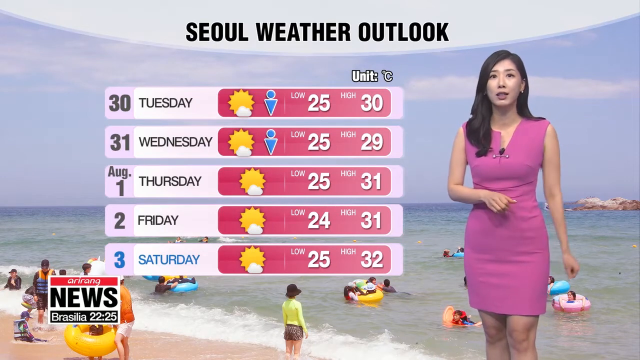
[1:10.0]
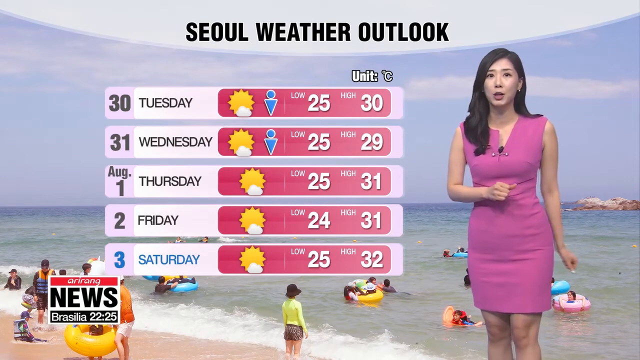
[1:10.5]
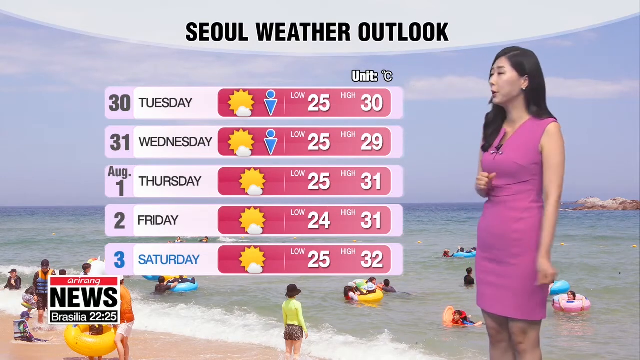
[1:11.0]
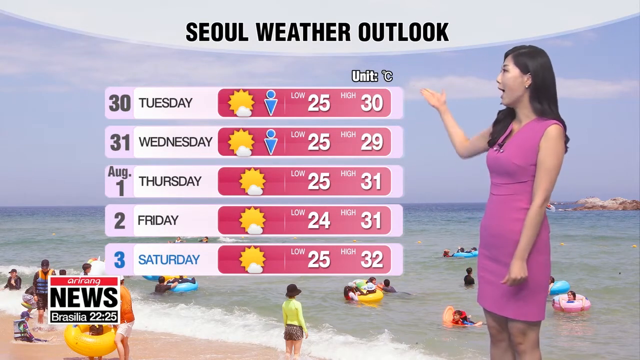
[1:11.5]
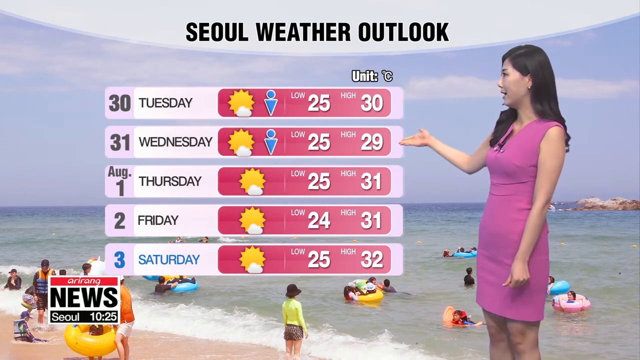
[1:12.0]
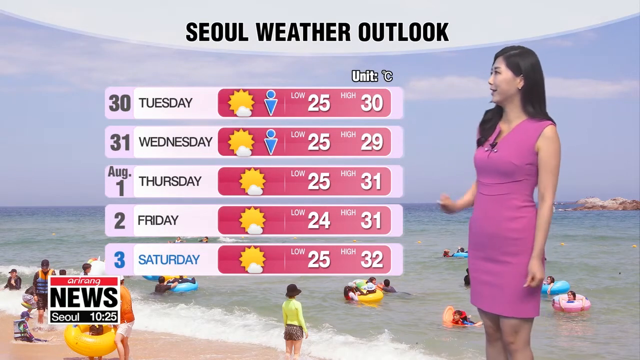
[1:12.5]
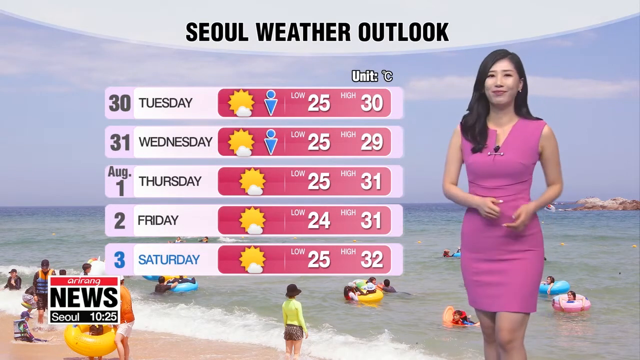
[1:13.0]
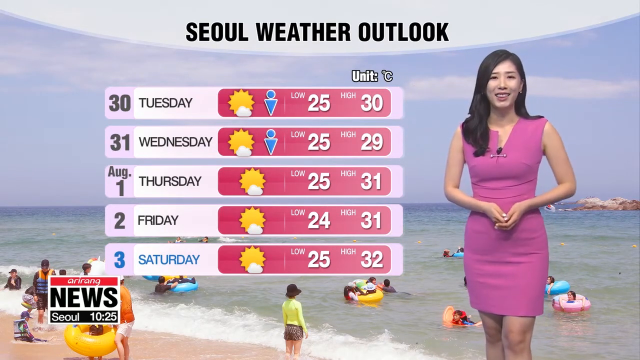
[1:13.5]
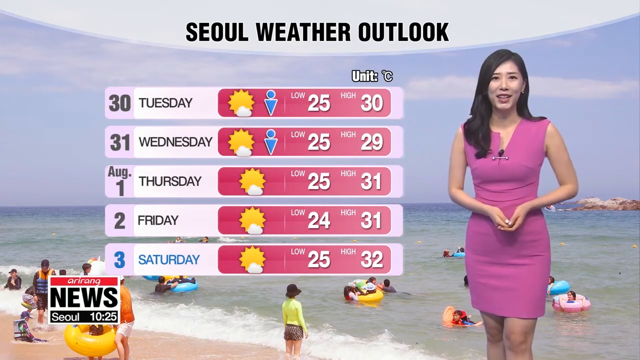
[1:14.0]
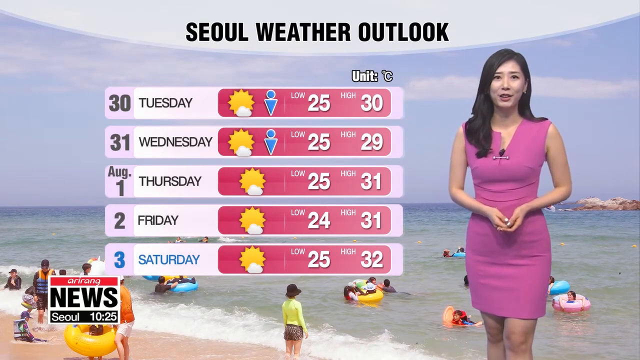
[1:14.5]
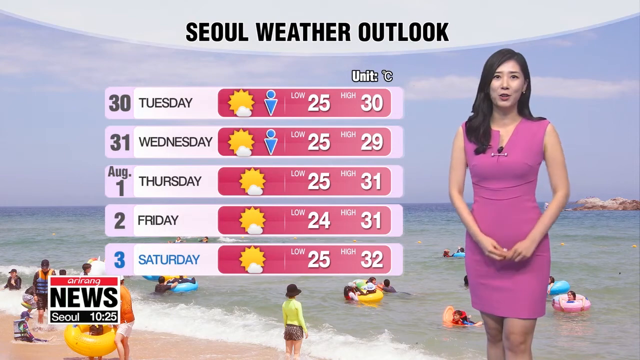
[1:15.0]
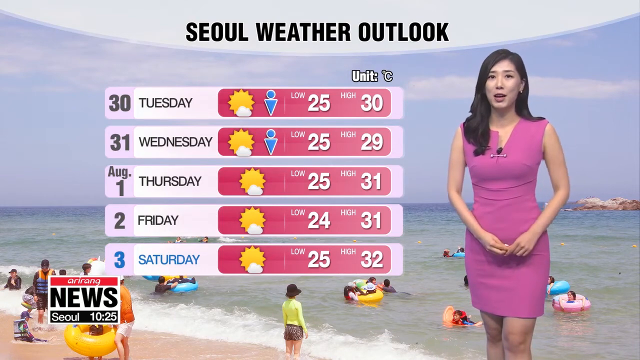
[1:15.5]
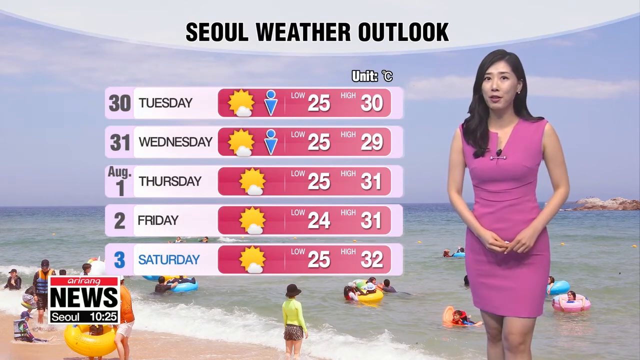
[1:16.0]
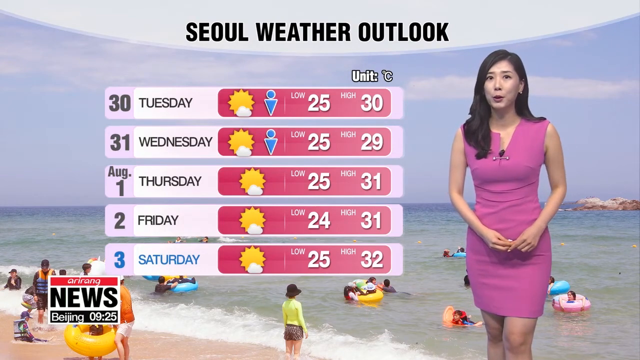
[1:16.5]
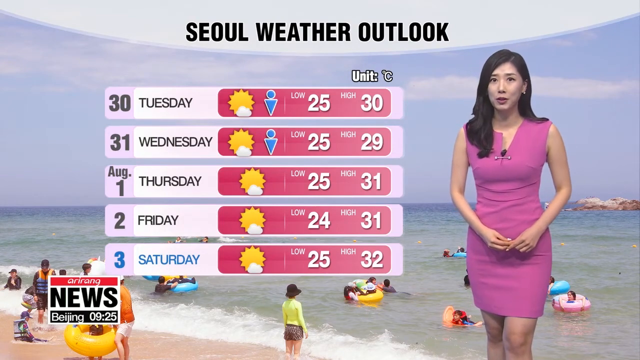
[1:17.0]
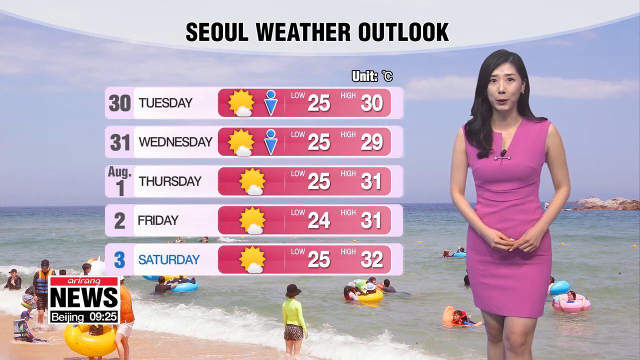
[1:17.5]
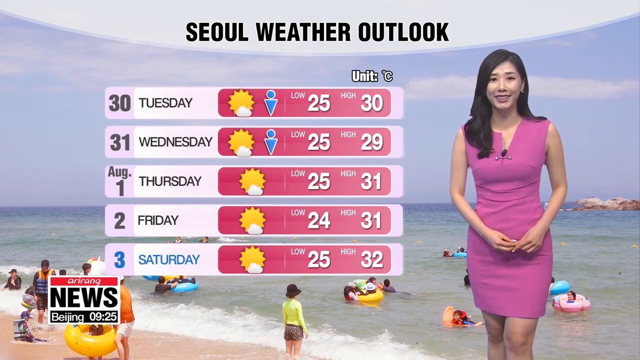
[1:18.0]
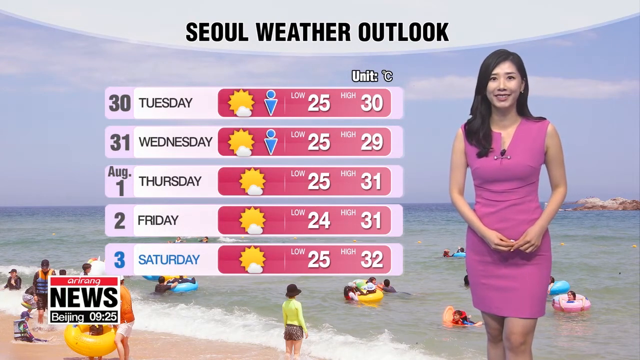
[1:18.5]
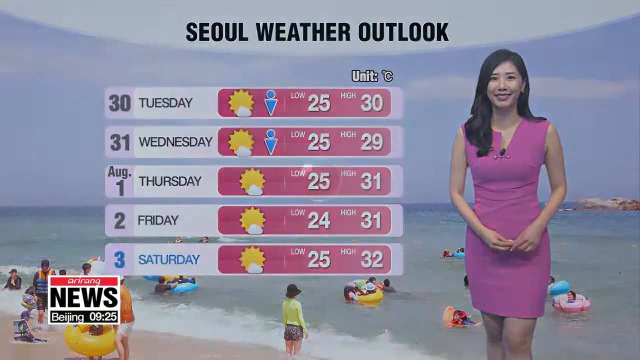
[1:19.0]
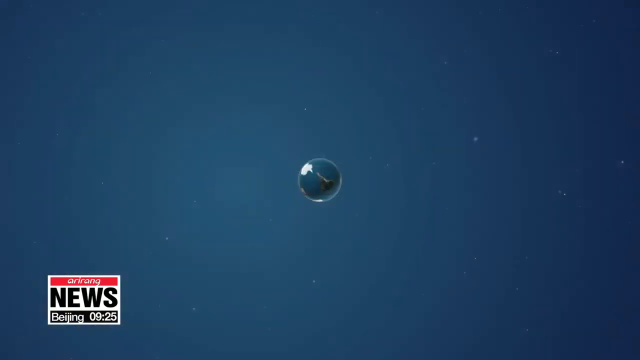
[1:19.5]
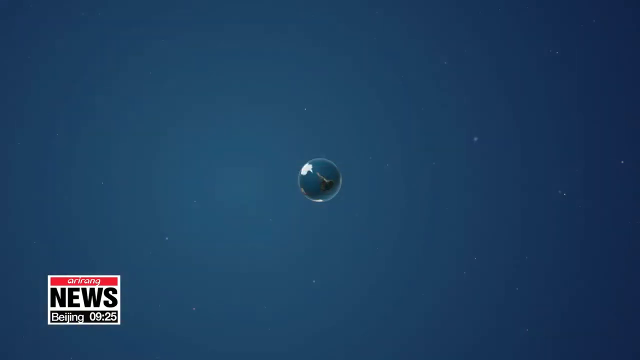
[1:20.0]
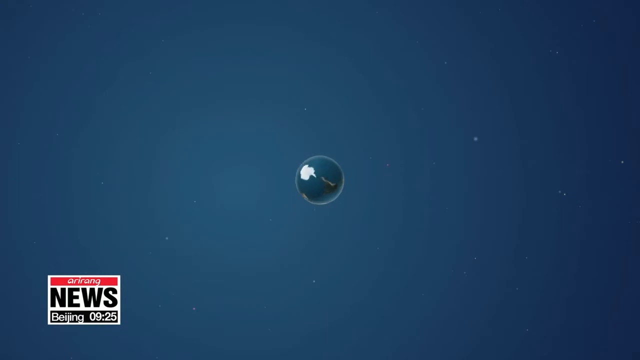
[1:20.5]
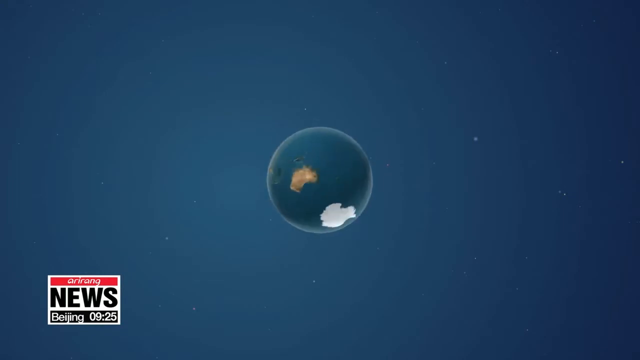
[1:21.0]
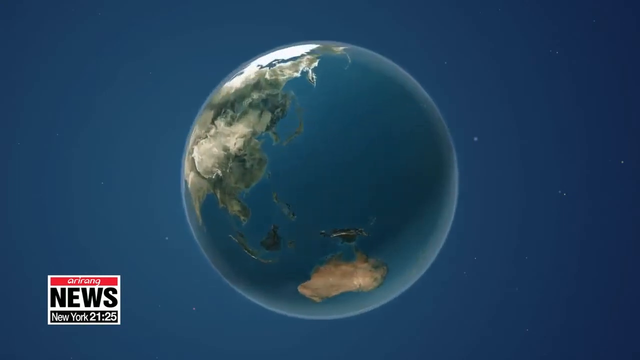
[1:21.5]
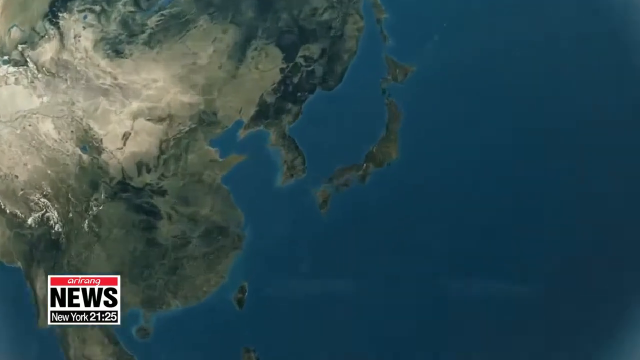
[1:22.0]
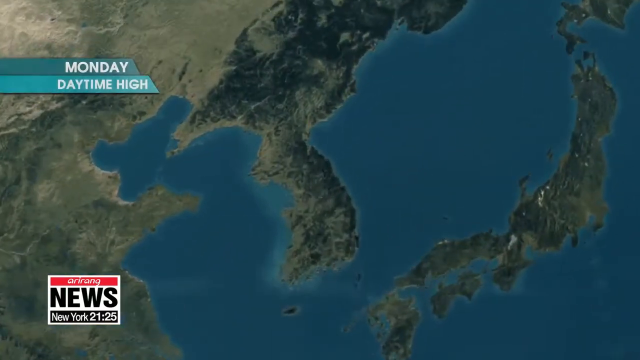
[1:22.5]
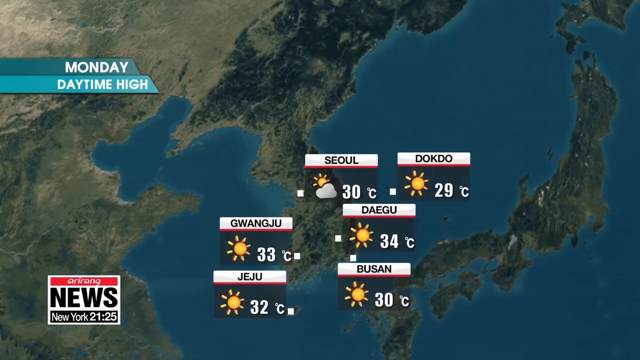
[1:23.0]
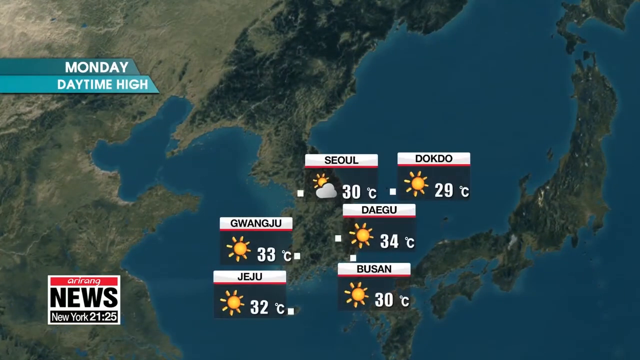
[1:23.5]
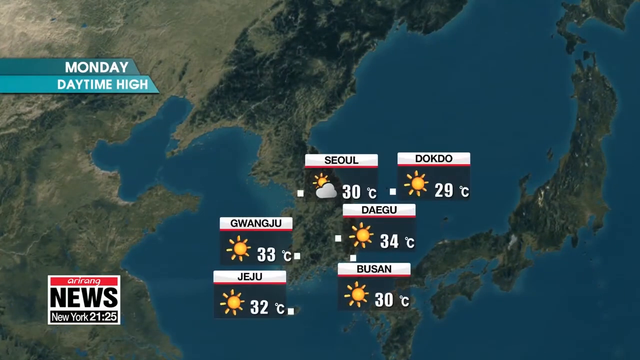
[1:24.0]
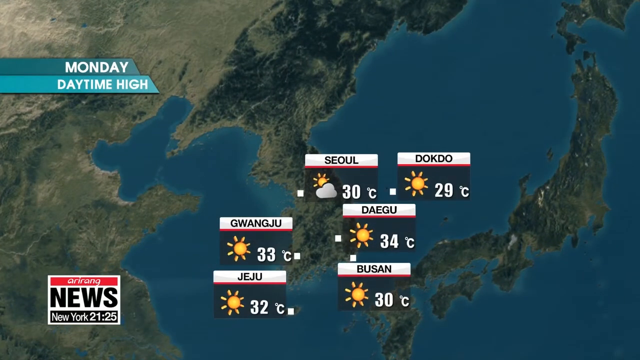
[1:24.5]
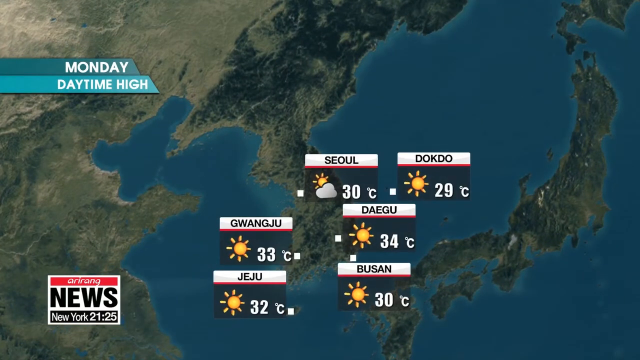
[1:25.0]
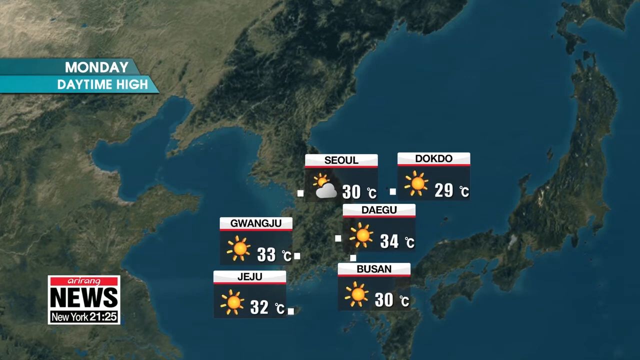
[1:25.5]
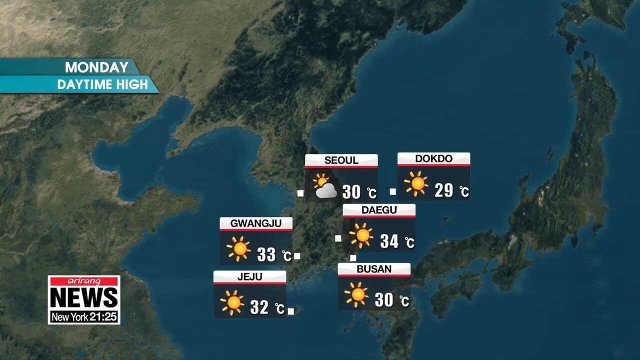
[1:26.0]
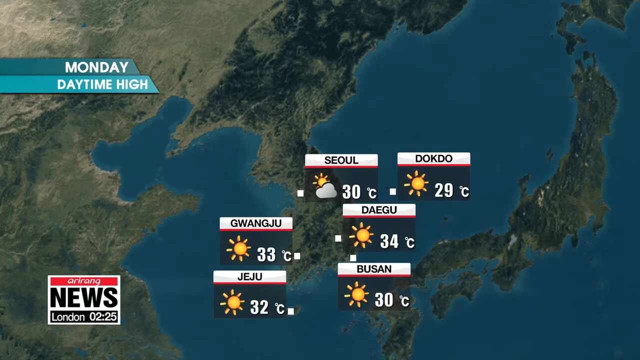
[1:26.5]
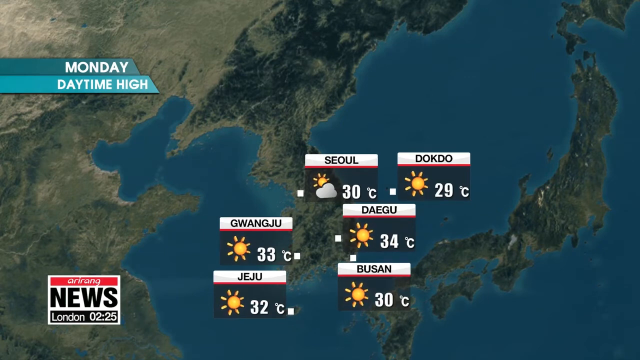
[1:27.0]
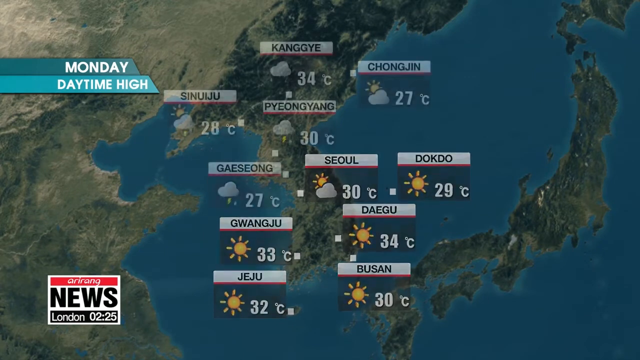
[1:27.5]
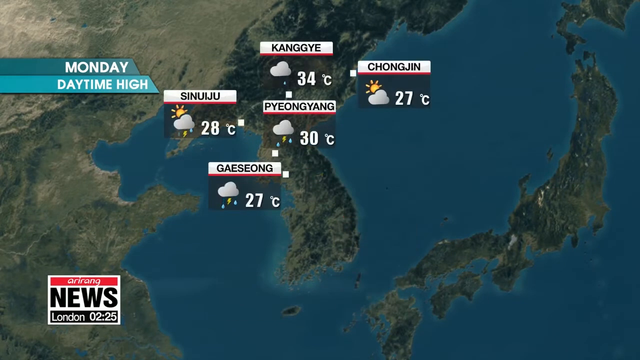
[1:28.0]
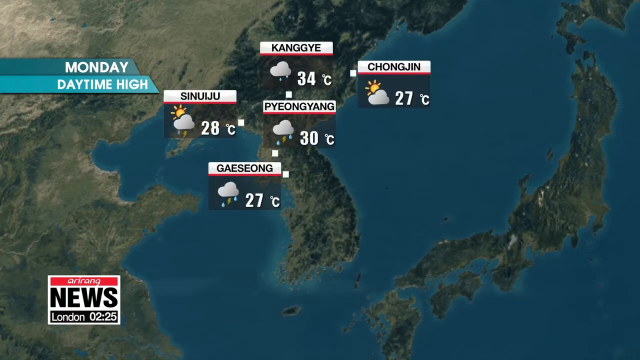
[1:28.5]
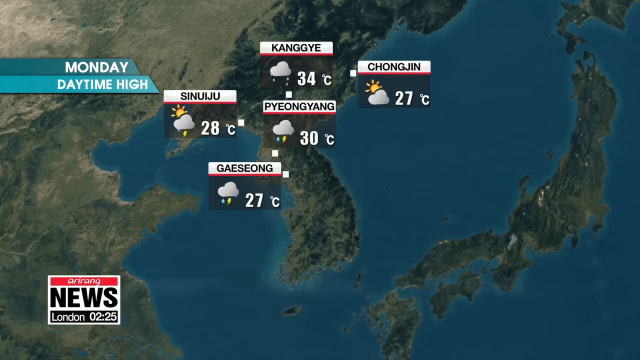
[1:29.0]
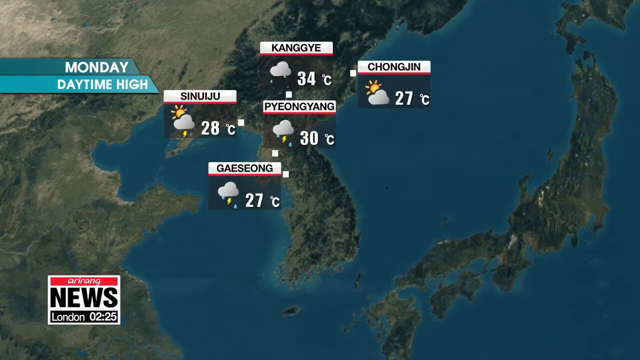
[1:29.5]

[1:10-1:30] The woman wears a pink dress with a mic attached to it and has long black hair. In the background, people are swimming at the beach, some wearing life jackets and some not. A news logo in the bottom left corner of the screen identifies this as a news channel. The screen reads "Seoul weather outlook" and lists "30 Tuesday," "31 Wednesday," "August 1," "Friday 2," and "Saturday 3," each with different temperatures, highs and lows. The woman actively points to the screen with her right hand and uses her hands as she speaks. The video then shows a globe that zooms in to a particular area, showing the weather expected there; the graphic shows the globe and a continent, along with the amount of rain and the temperature.